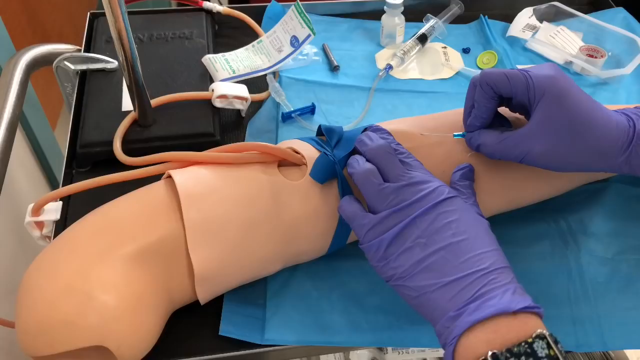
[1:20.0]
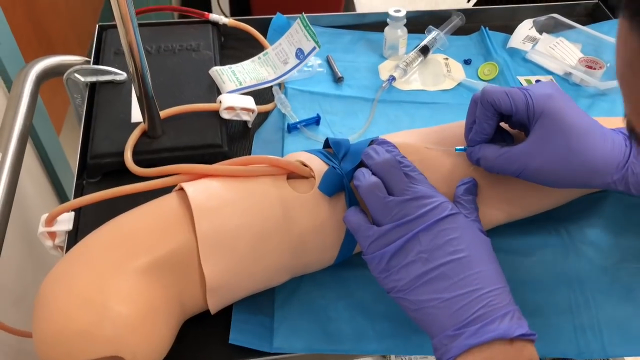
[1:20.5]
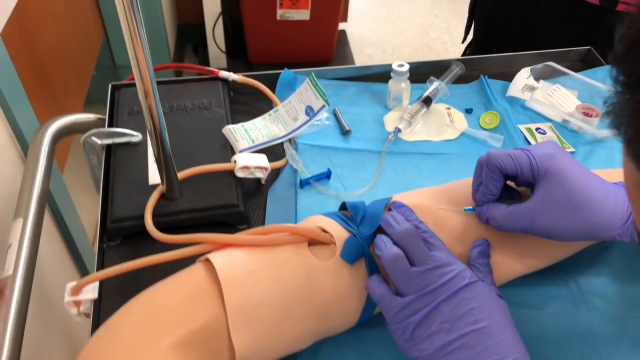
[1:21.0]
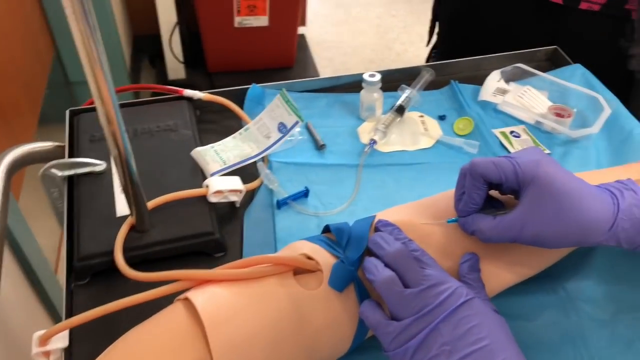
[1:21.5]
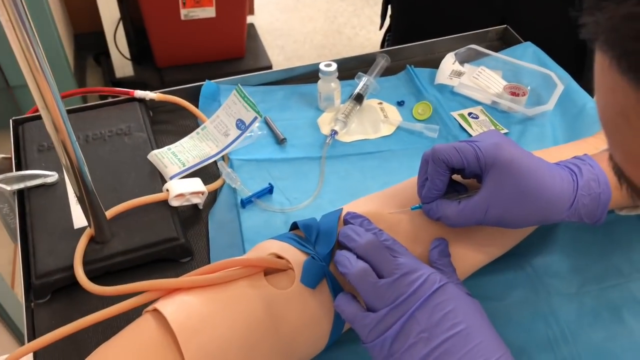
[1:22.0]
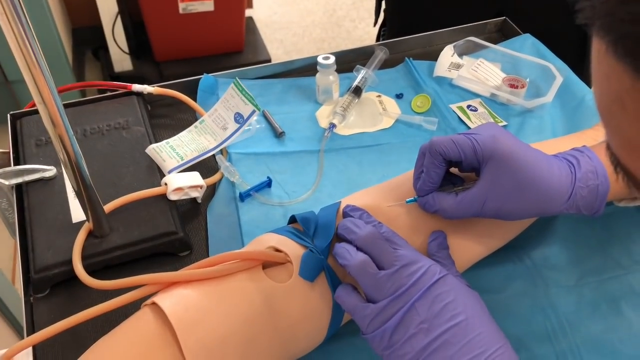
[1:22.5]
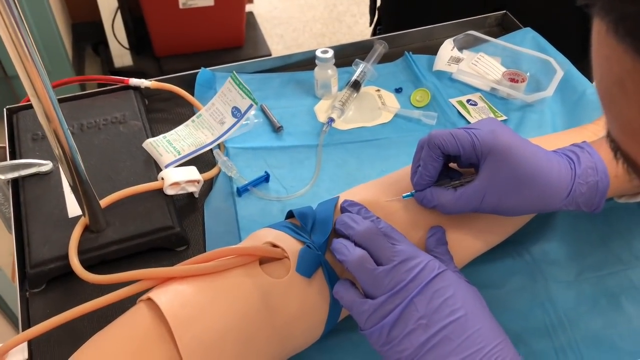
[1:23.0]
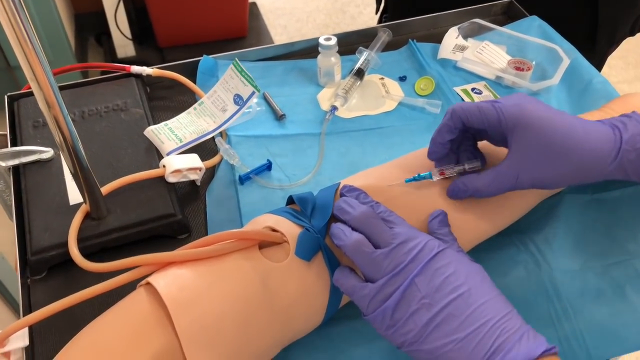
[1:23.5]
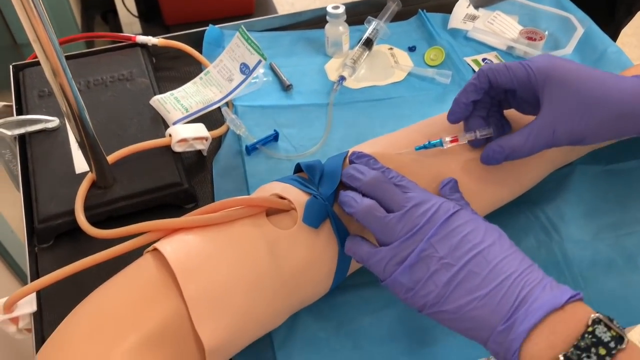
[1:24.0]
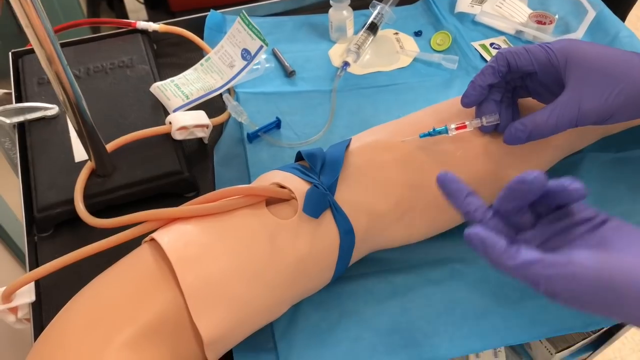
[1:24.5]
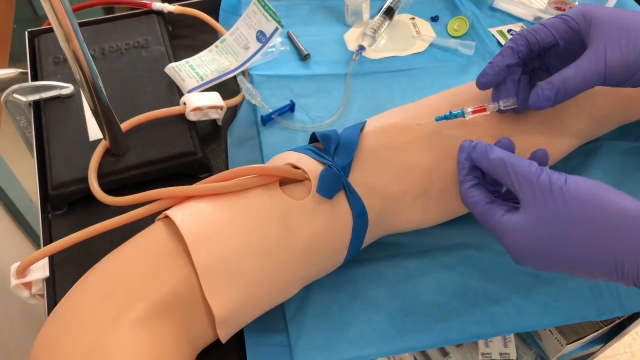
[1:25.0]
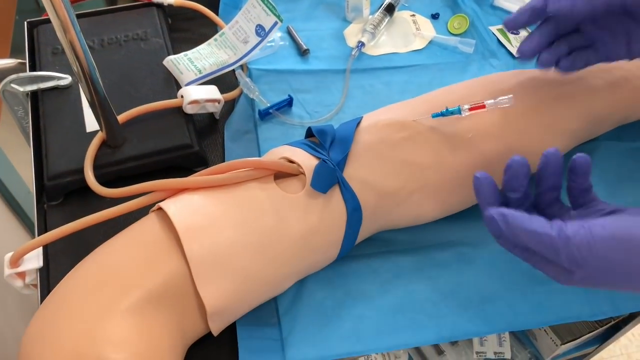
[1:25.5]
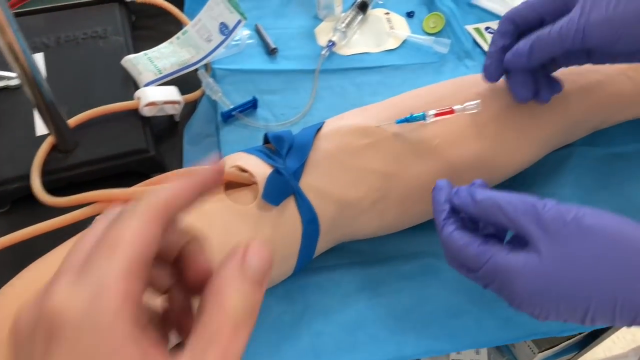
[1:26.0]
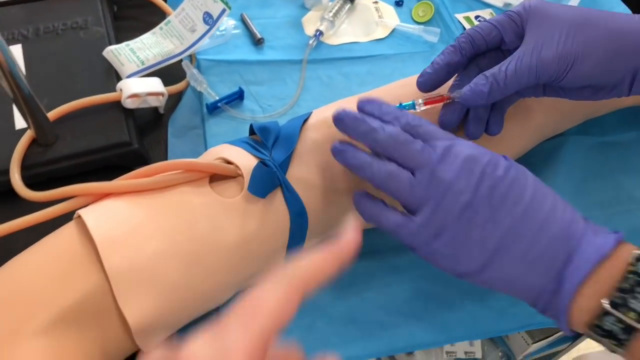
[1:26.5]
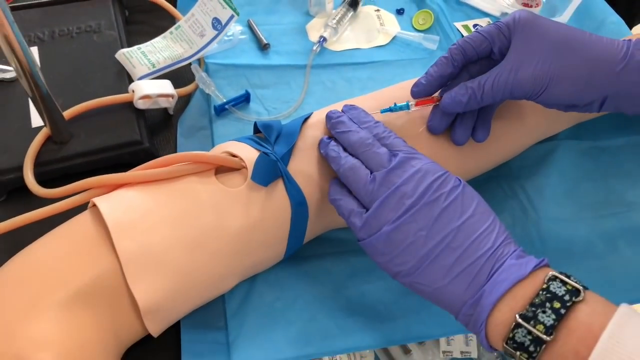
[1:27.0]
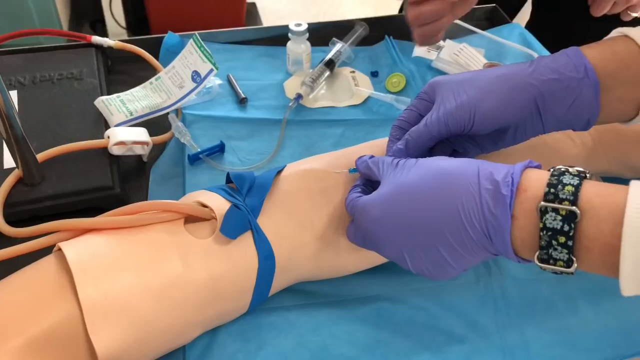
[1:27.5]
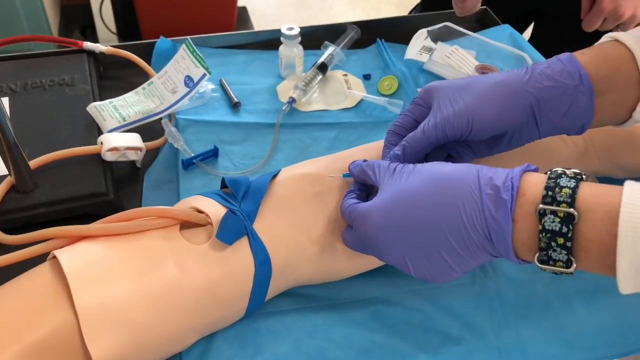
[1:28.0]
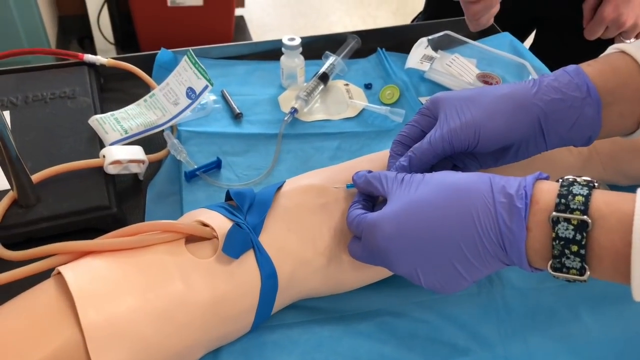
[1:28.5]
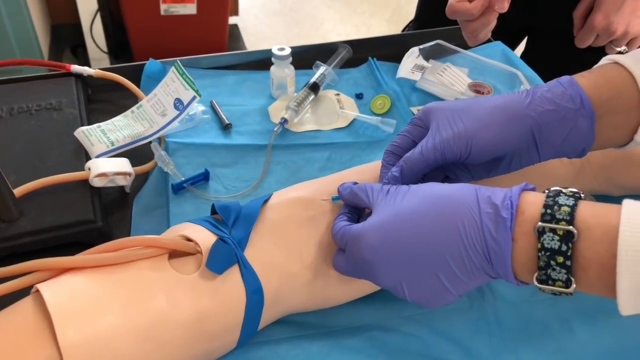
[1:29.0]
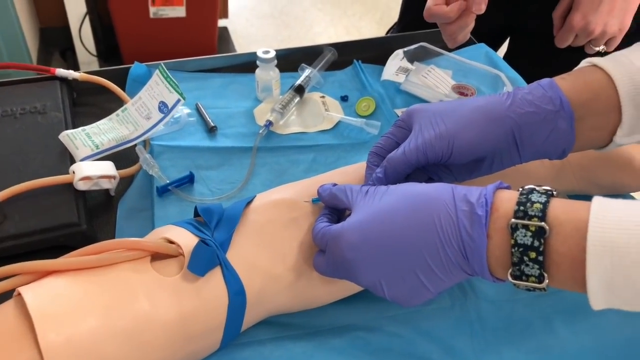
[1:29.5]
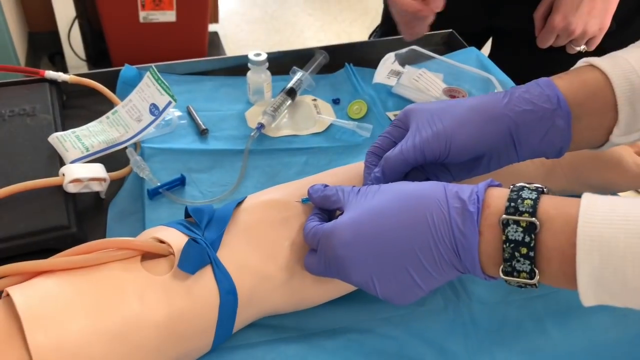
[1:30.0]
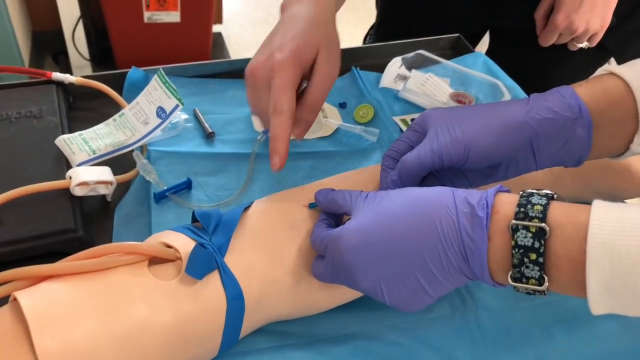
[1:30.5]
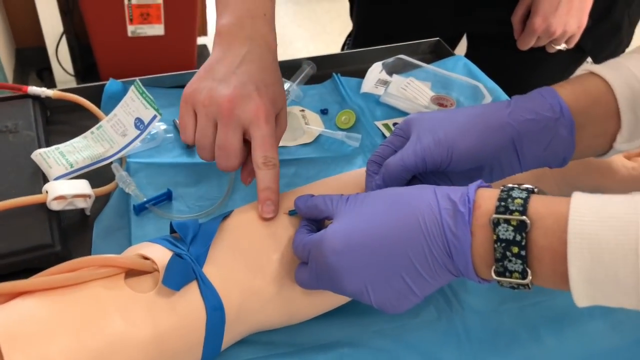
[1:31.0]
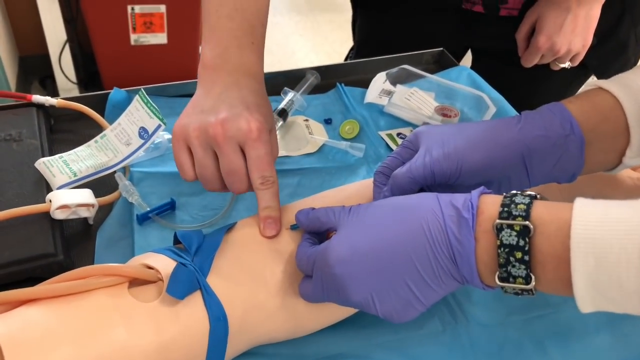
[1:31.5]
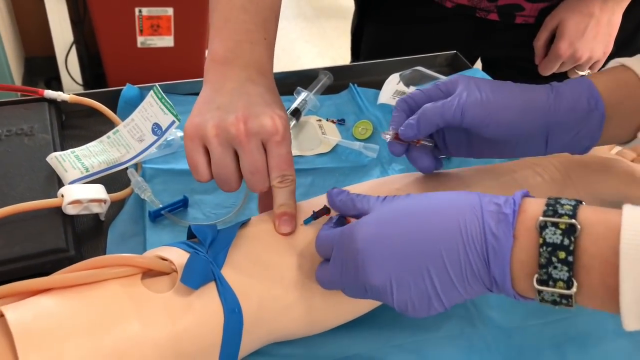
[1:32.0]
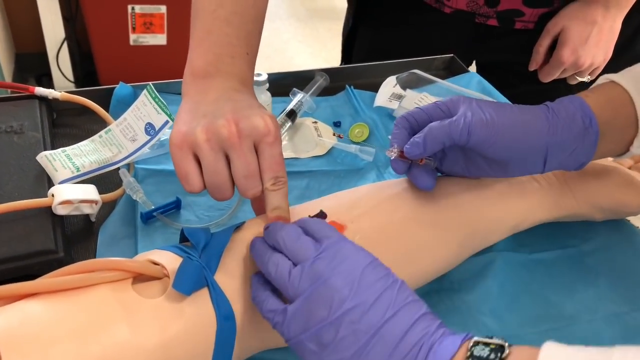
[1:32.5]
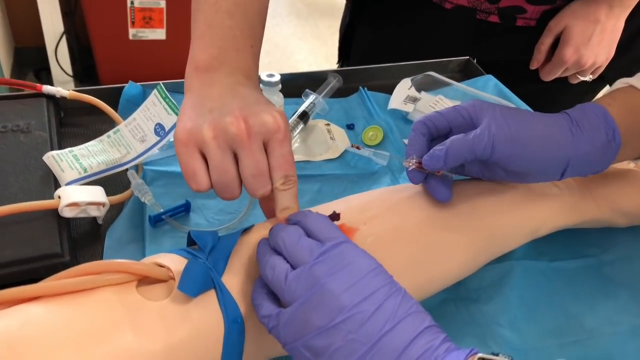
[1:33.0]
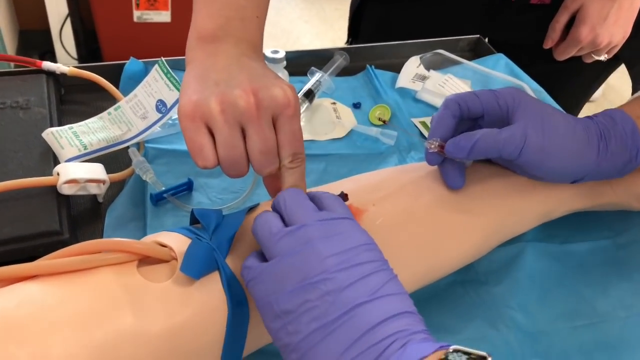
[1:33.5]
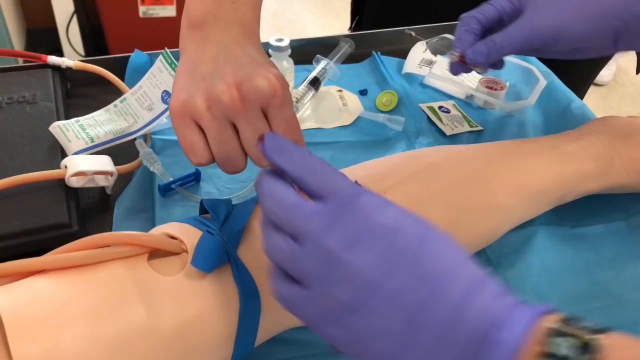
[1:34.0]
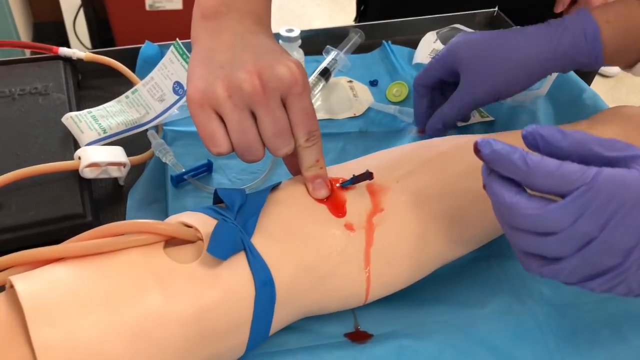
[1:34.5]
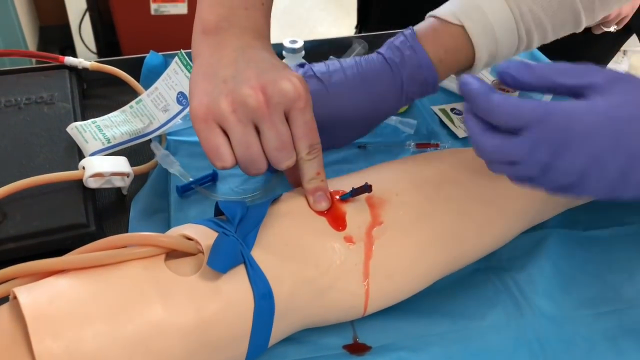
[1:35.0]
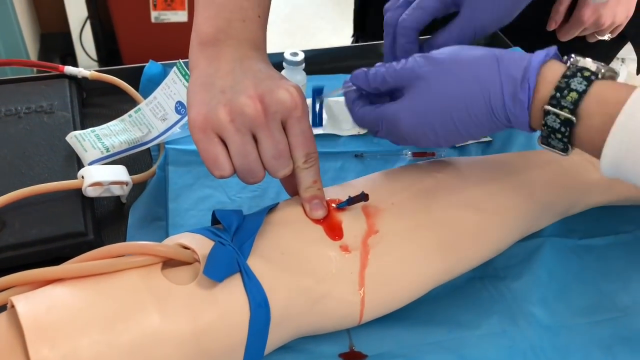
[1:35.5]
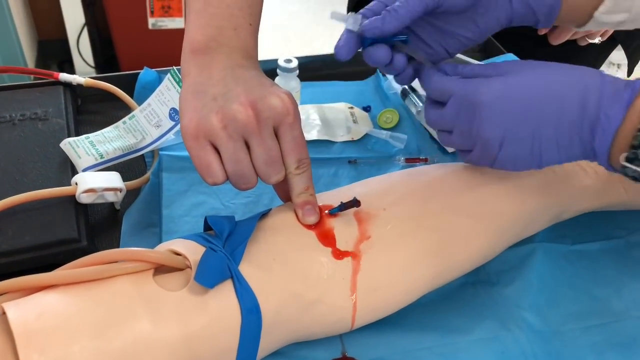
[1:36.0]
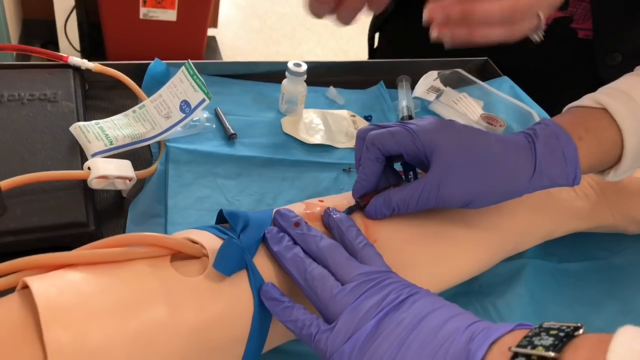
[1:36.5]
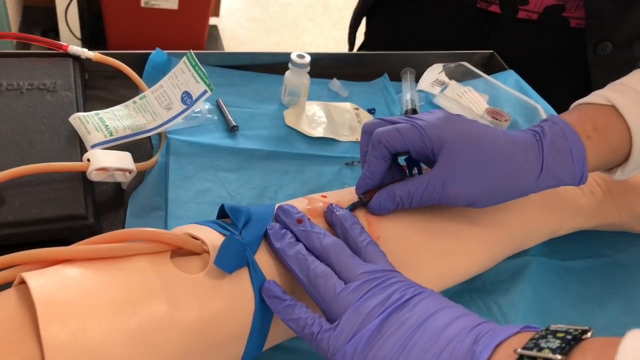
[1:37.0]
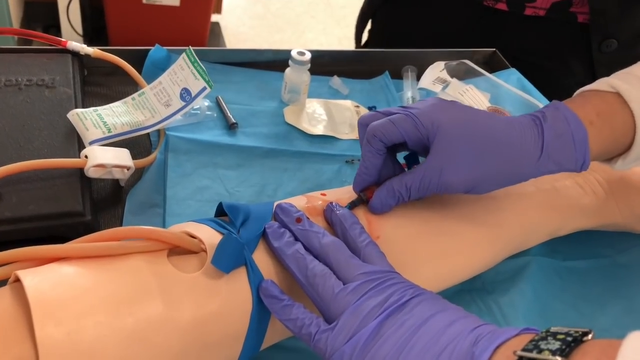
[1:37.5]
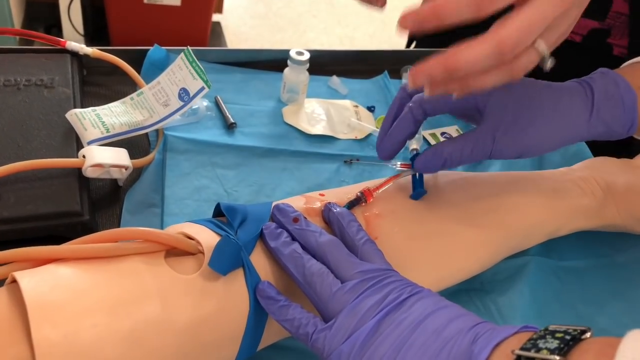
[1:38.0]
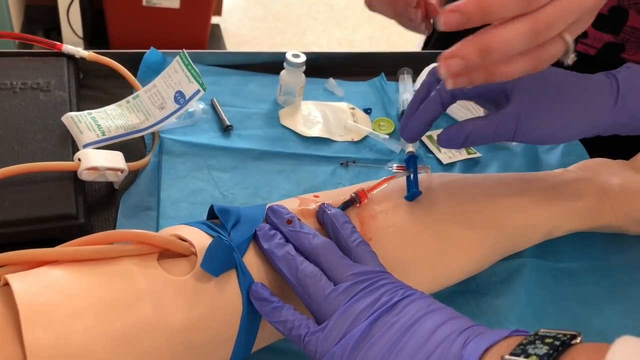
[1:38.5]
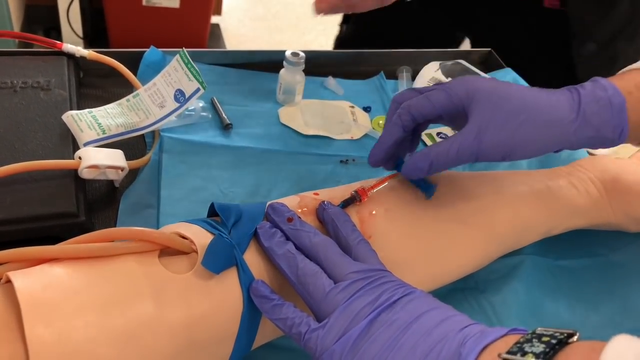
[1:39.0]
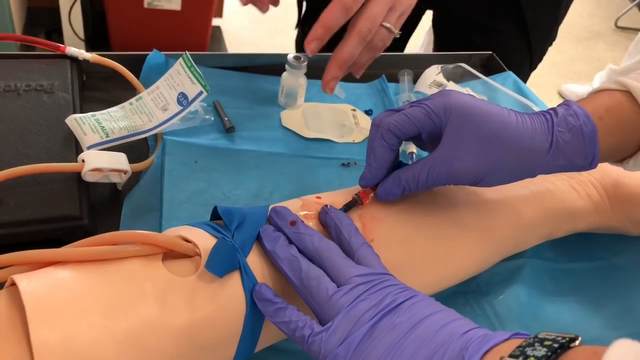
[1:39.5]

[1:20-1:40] A medical professional, apparently wearing blue or purple latex gloves, inserts a needle with a vial of liquid attached into the phlebotomy practice arm. Once the needle is inserted, red liquid comes out of the practice arm. The medical professional then takes a portion of the needle off, leaving the needle part in the arm. Another woman walks up wearing civilian clothes: black pants and a black top with a red floral print. With her right hand, she pushes her pointer finger down on the forearm right where the needle is inserted, and red liquid spews out of the penetrated area. The medical professional with purple gloves then attaches a tube, so the blood extracted from the practice arm runs down that tube. In the background are items such as vials, open packages and medical tape.